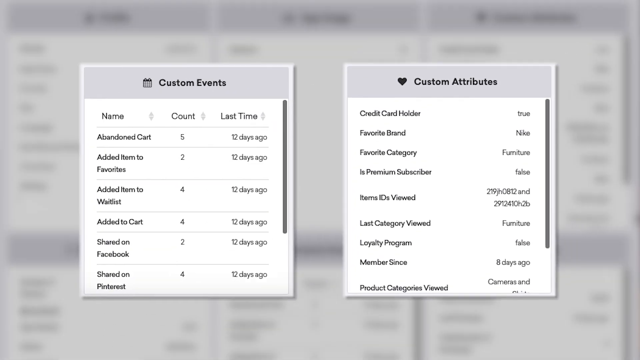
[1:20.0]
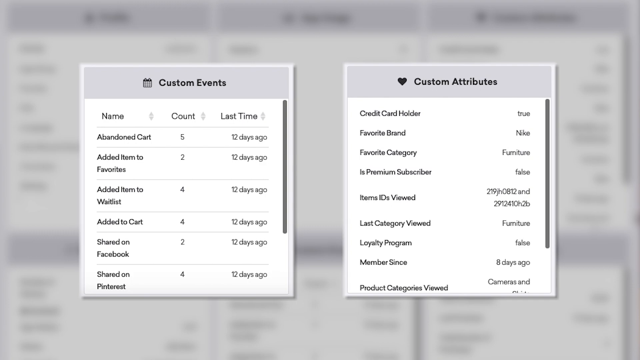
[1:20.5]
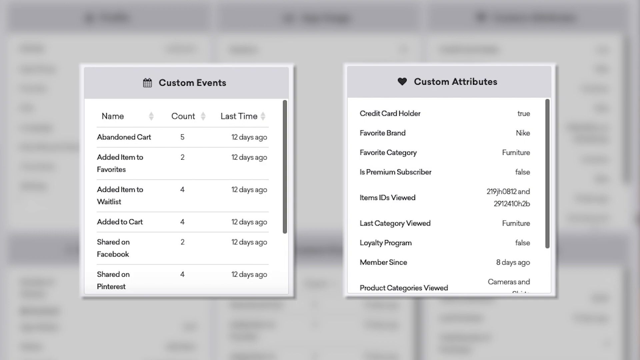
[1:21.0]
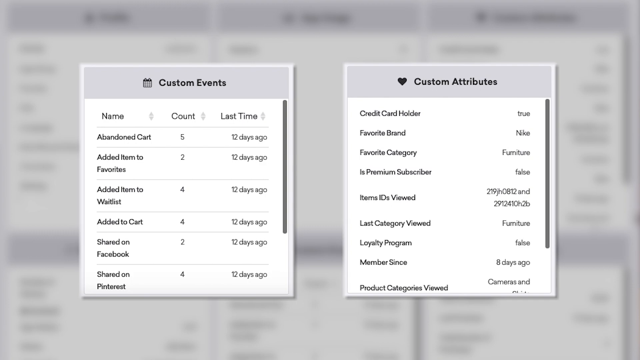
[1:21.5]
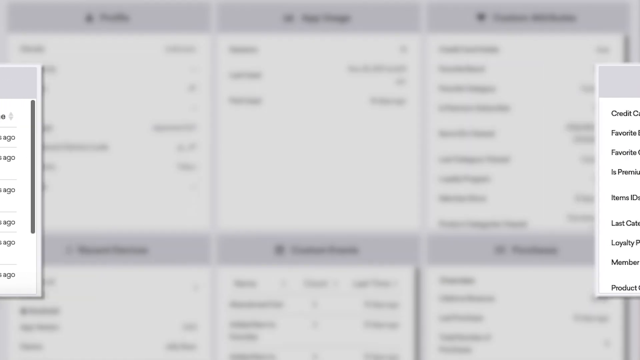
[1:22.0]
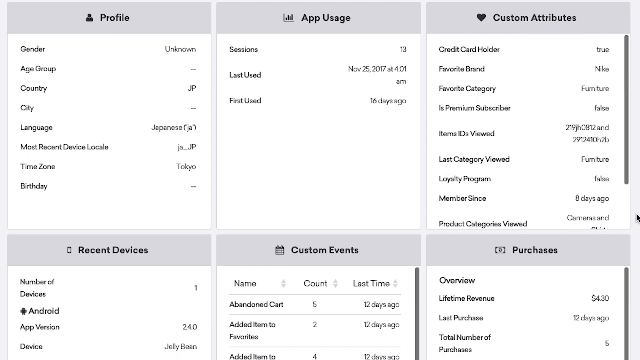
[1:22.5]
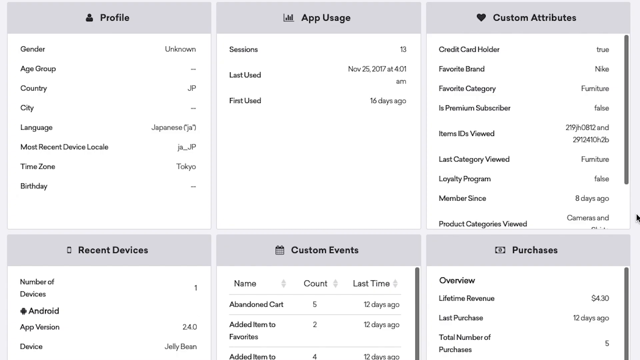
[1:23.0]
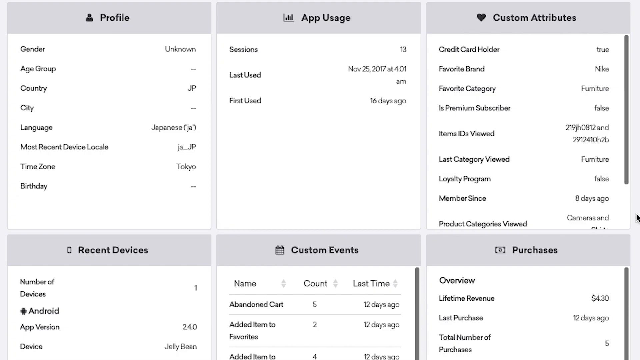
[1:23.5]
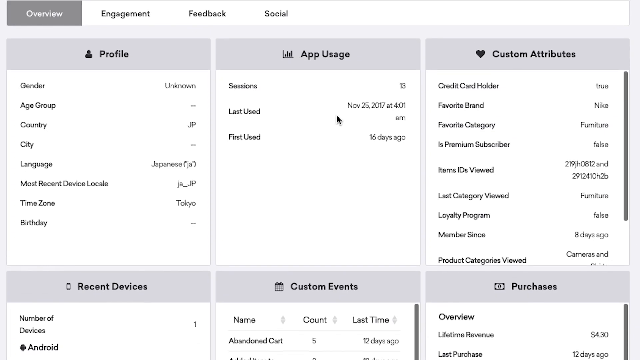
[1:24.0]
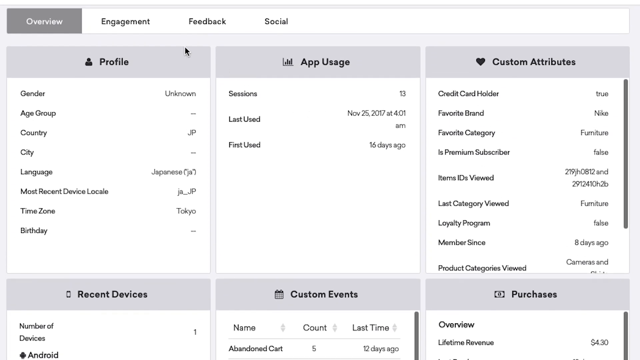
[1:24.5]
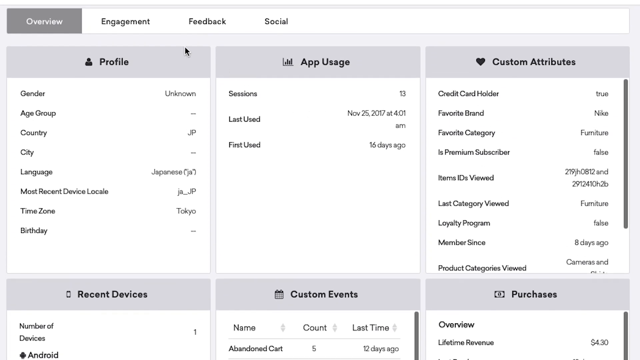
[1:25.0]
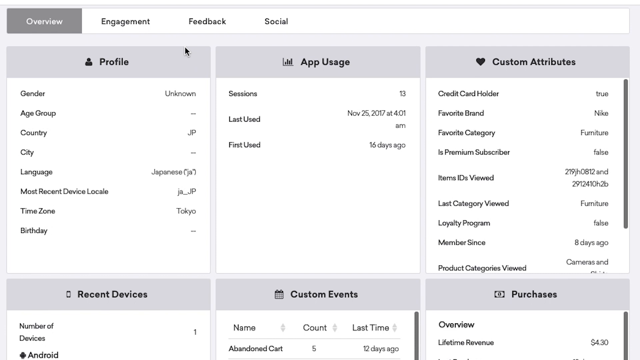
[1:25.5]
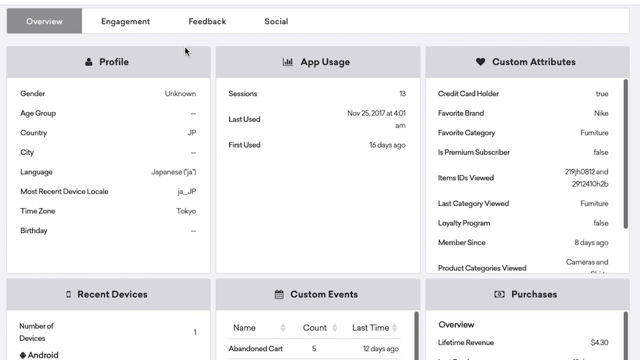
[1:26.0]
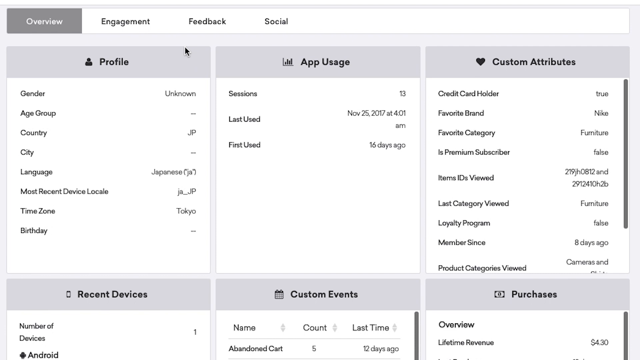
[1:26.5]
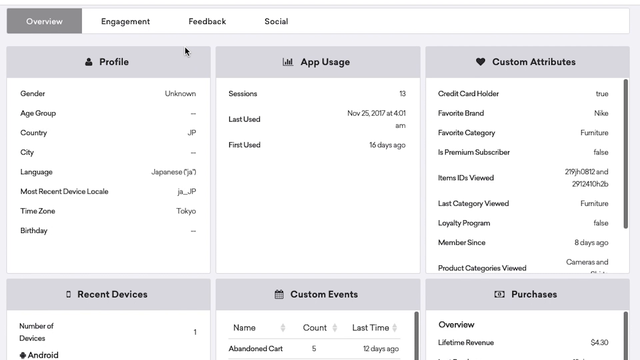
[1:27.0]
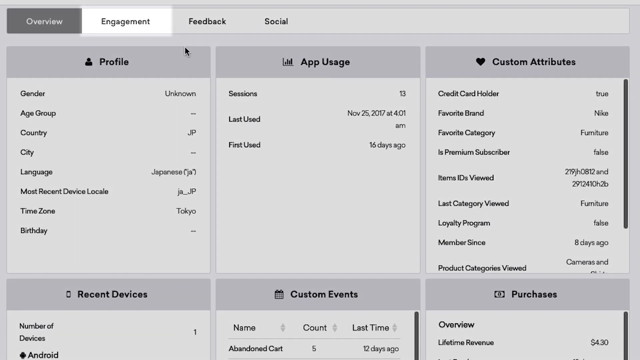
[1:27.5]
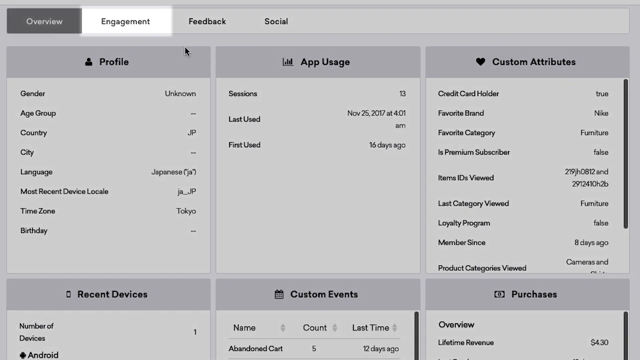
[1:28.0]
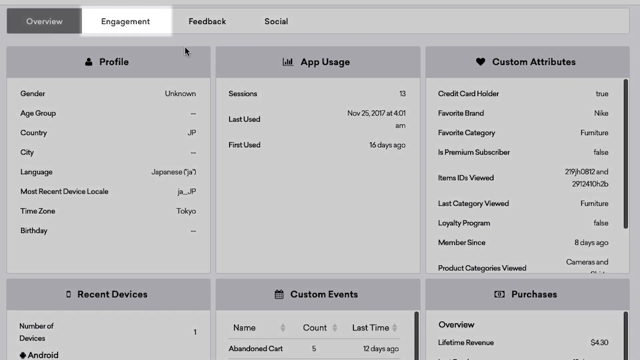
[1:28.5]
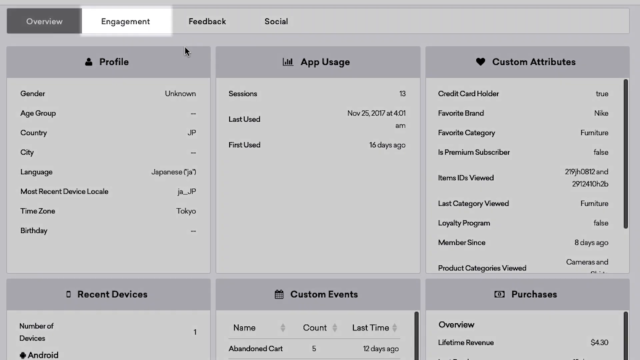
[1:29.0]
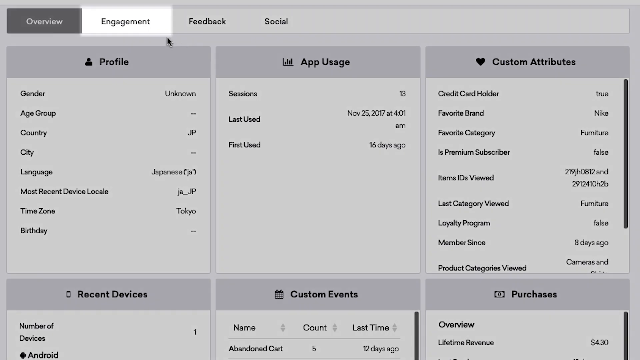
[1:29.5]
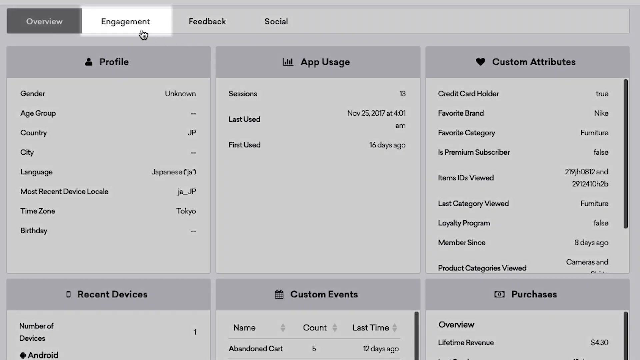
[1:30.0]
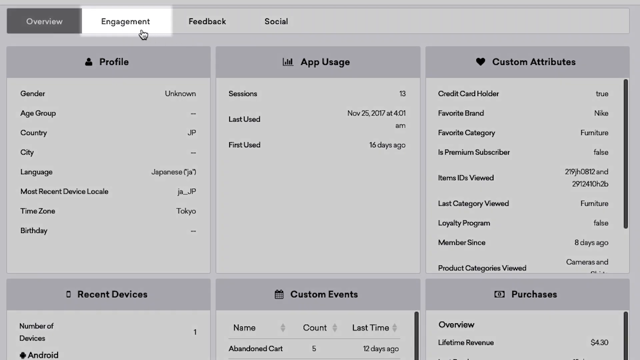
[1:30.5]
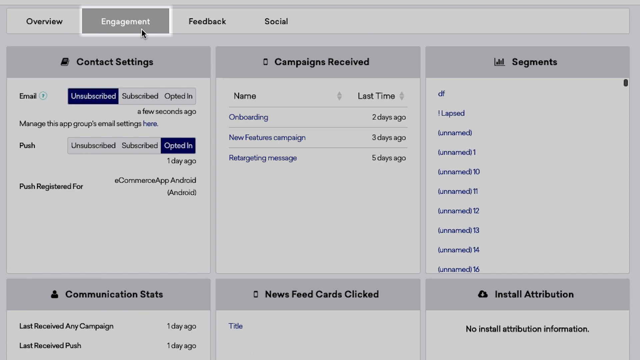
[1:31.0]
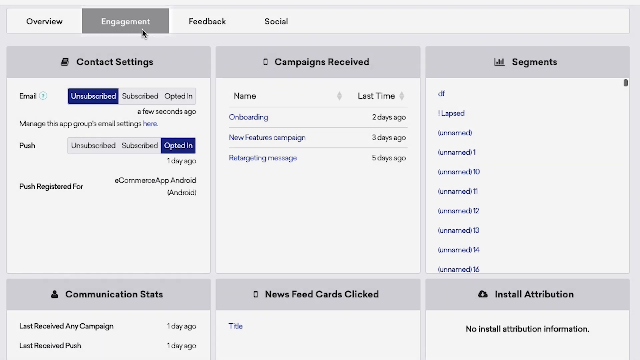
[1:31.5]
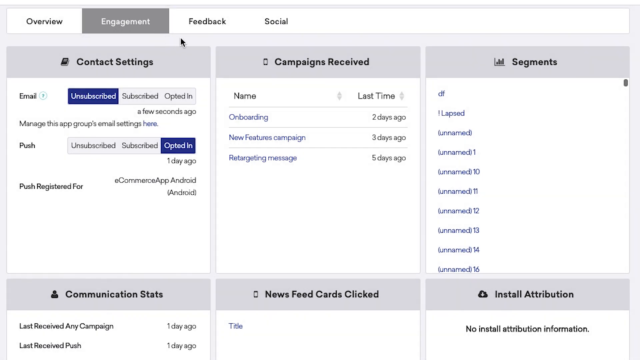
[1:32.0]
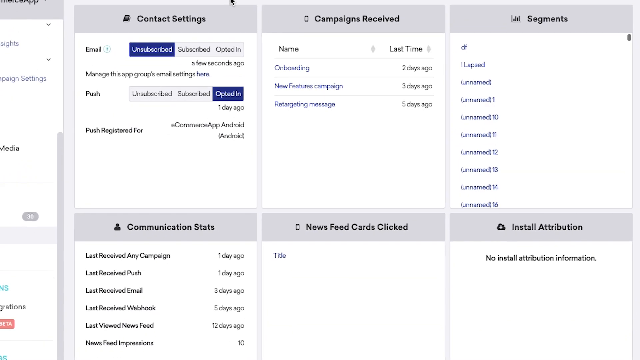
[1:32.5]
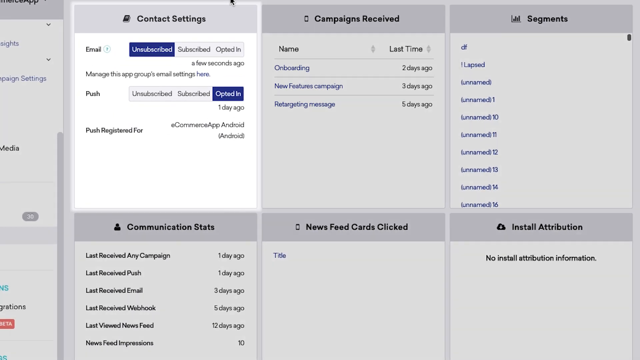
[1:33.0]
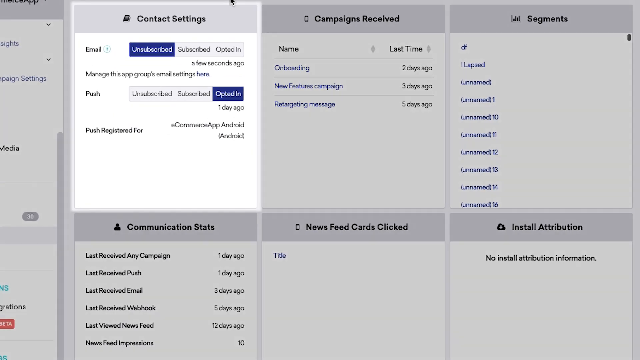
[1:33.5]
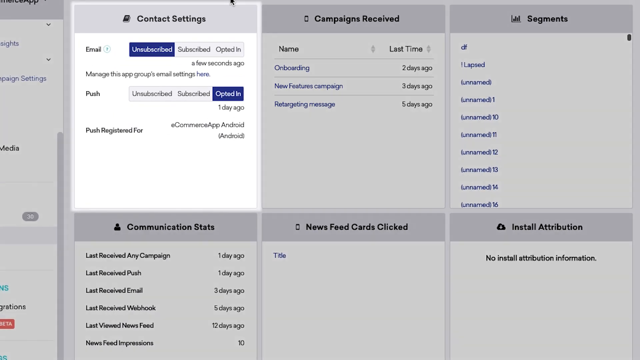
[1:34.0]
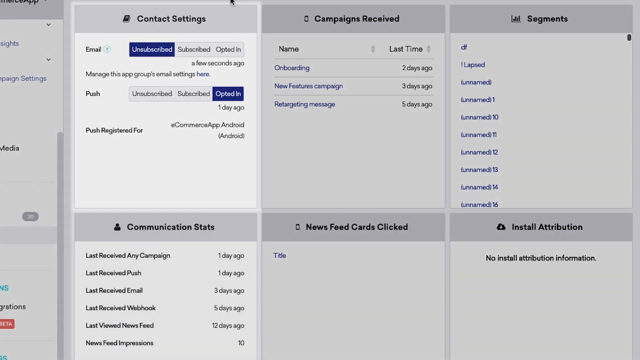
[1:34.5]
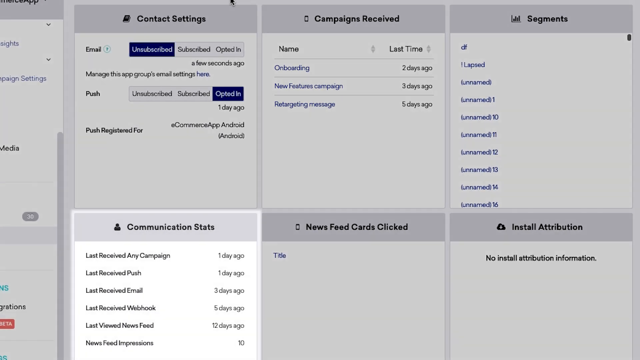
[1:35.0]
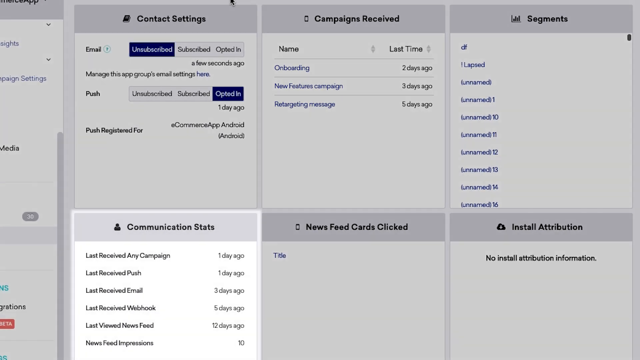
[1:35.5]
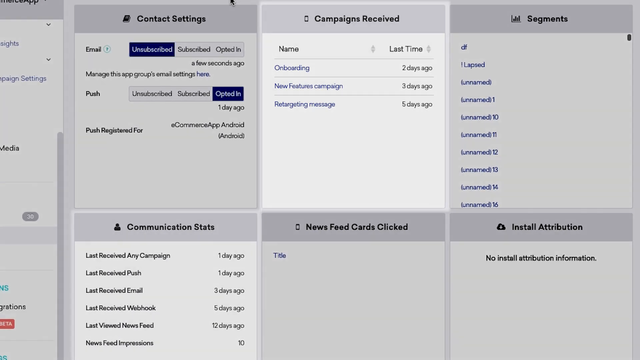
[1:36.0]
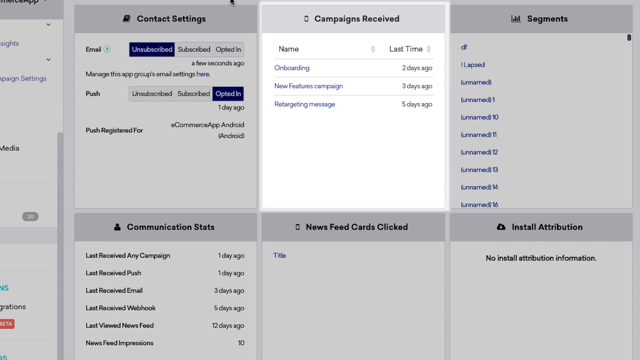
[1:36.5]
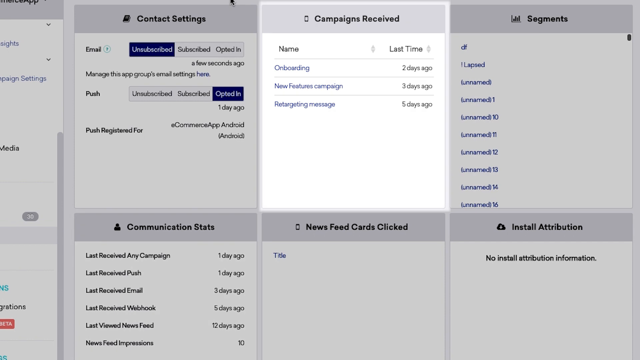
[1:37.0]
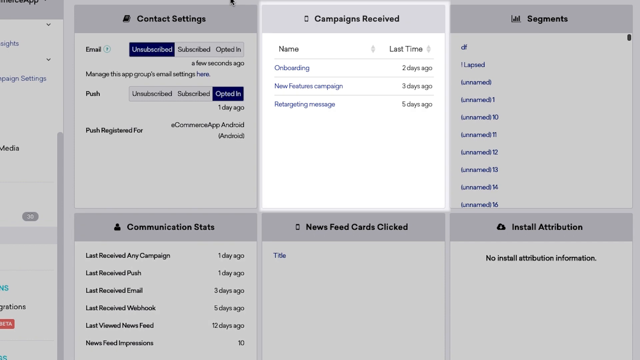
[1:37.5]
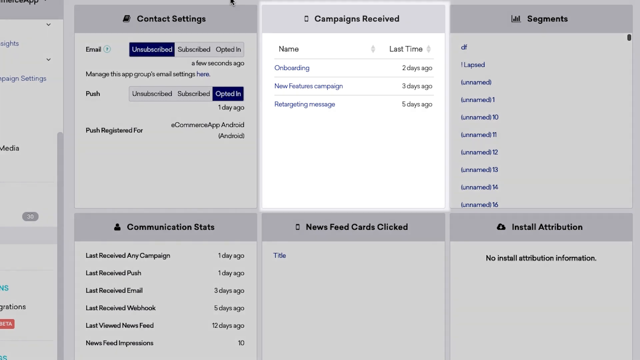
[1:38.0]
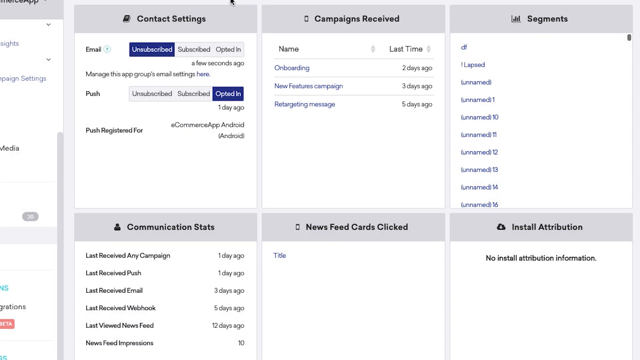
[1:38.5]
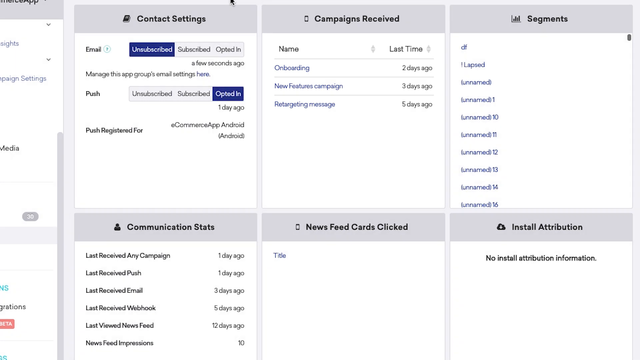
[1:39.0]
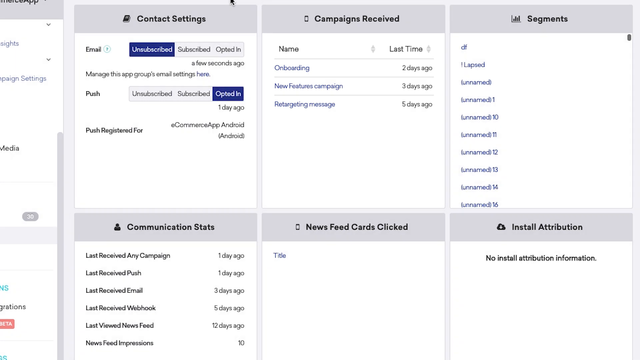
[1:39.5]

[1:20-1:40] Two pop-up boxes with white backgrounds and light gray banners appear side by side in the app, with the screen behind them blurred. The one on the left has a gray banner with black text reading "Custom Events." Below are columns from left to right for name, count and last time used, with pull-down options. The listed custom events are "Abandoned Cart" with a count of 5, 12 days ago; "Added Item to Favorites" with a count of 2, 12 days ago; "Added Item to Waitlist" with a count of 4, 12 days ago; "Added to Cart" with a count of 4, 12 days ago; "Shared on Facebook" with a count of 2, 12 days ago; and "Shared on Pinterest" with a count of 4, 12 days ago. To the right, "Custom Attributes" is also on a gray banner, and below, in white with black text, it is broken down into subsections such as "Credit Card Holder," "Favorite Brand," "Favorite Category," "Premium Subscriber," "Items ID'd Viewed," "Last Category Viewed," "Loyalty Program" and "Member Since Date," which is 8 days ago. The view then slides open to show the background, and a mouse moves around the screen.